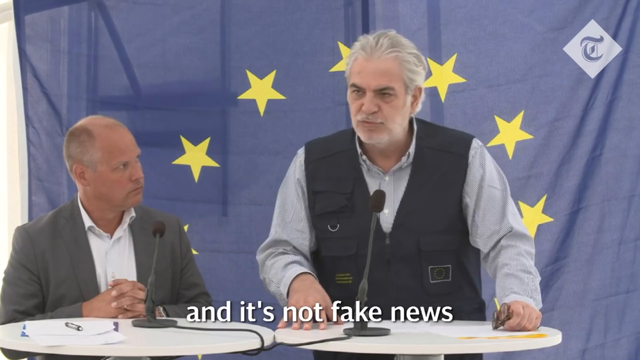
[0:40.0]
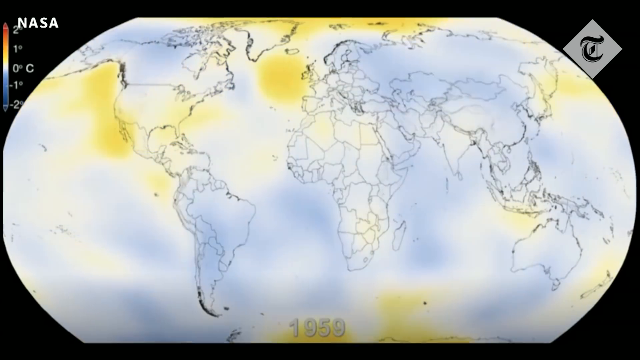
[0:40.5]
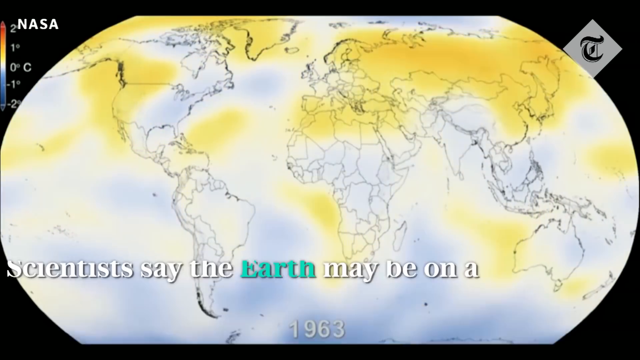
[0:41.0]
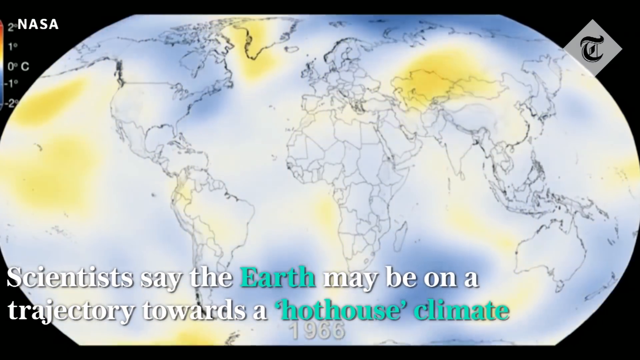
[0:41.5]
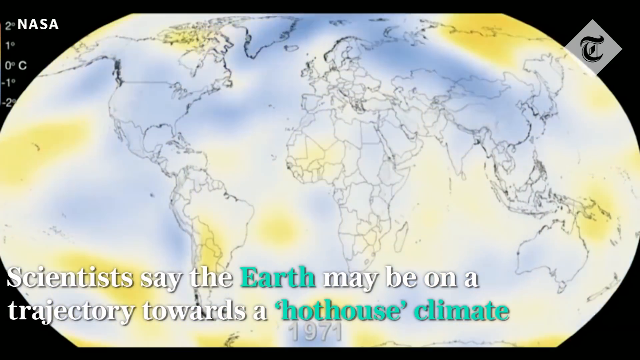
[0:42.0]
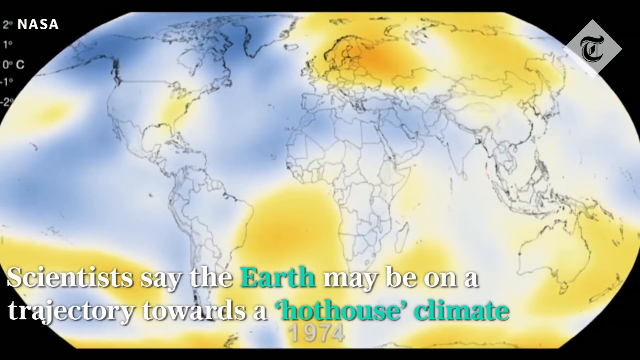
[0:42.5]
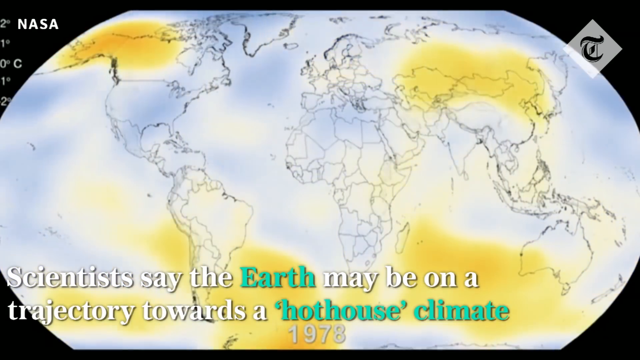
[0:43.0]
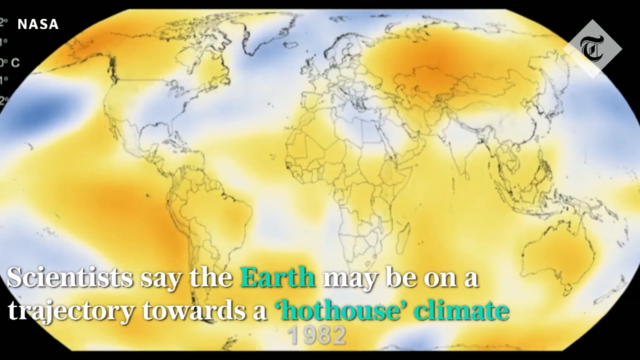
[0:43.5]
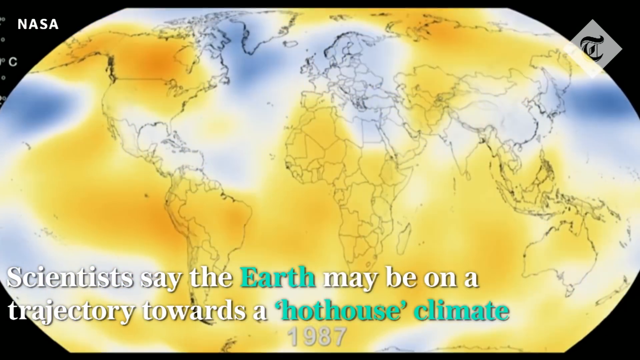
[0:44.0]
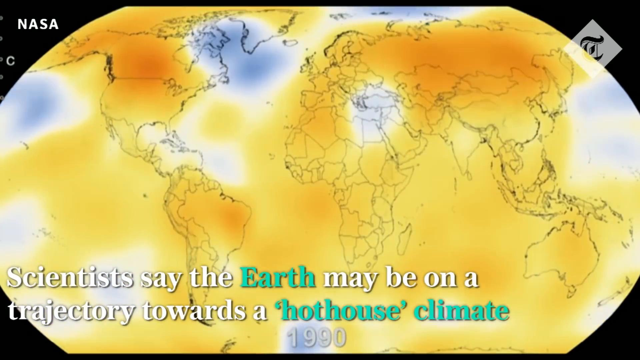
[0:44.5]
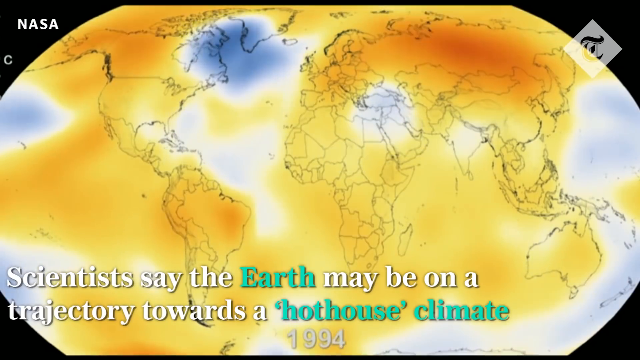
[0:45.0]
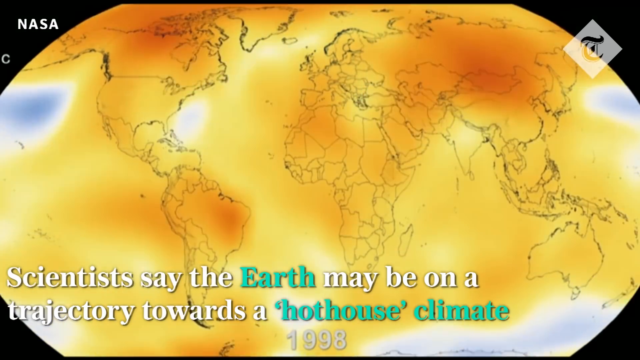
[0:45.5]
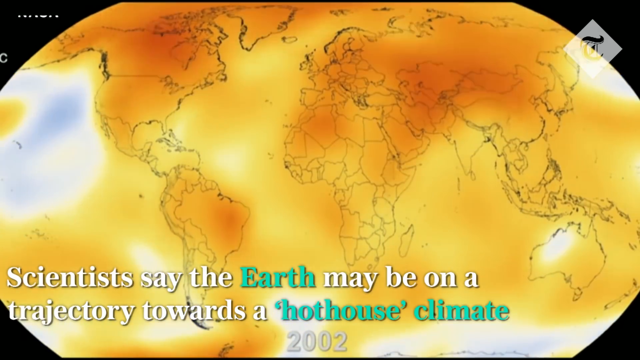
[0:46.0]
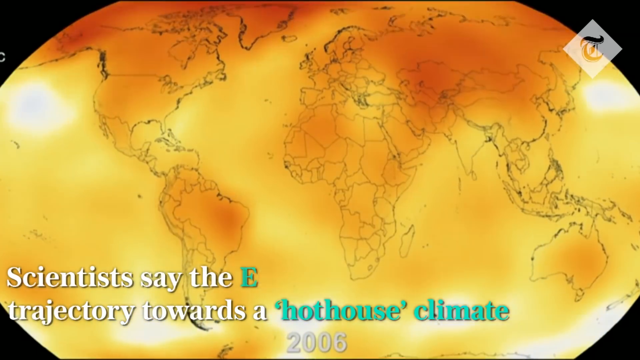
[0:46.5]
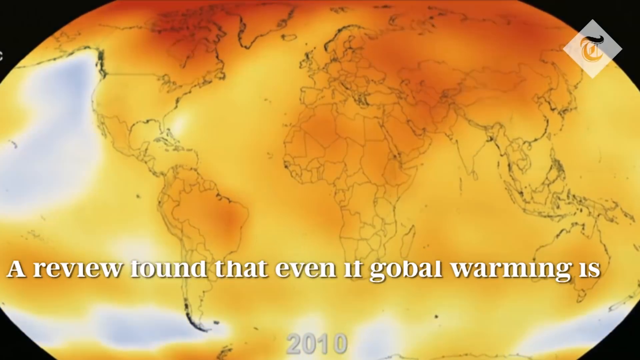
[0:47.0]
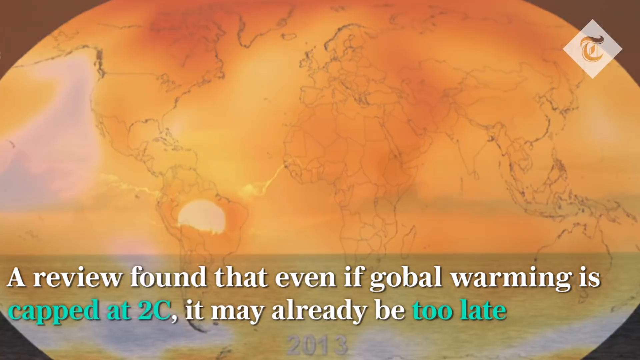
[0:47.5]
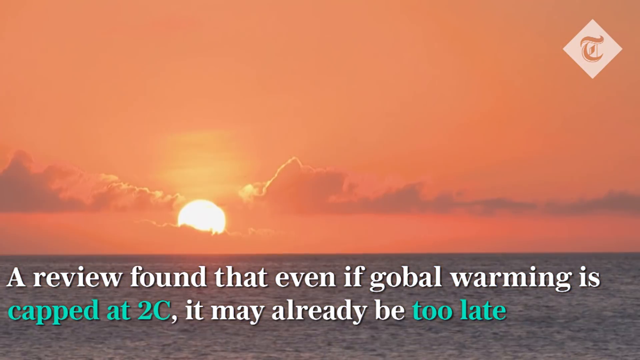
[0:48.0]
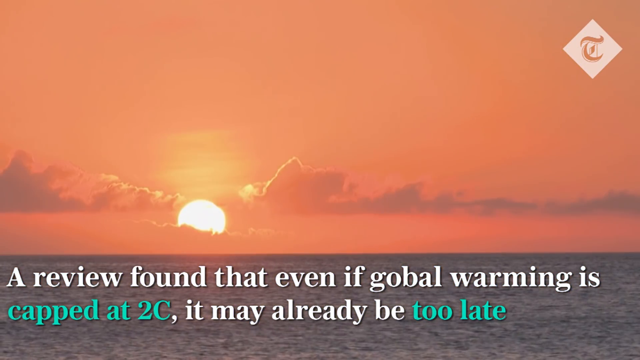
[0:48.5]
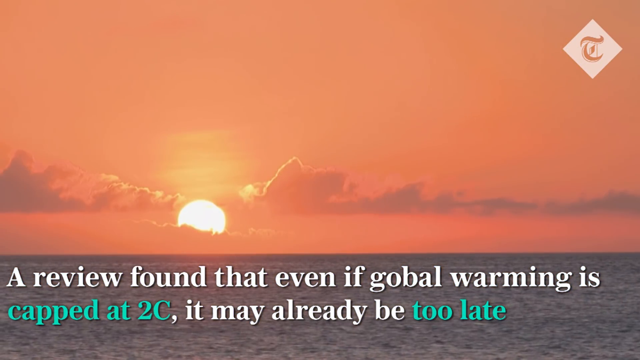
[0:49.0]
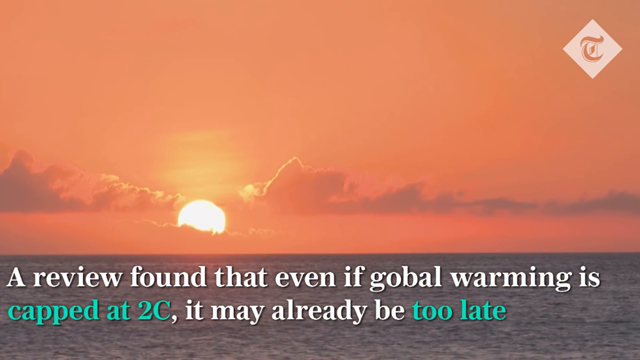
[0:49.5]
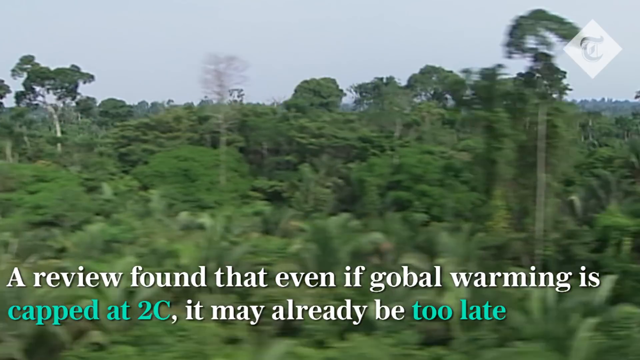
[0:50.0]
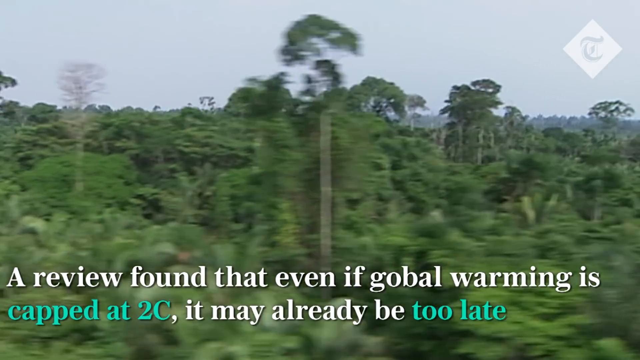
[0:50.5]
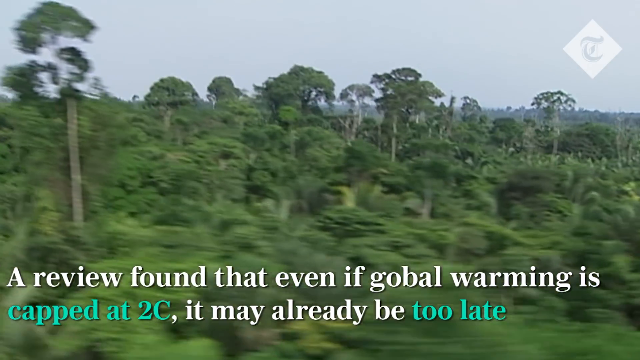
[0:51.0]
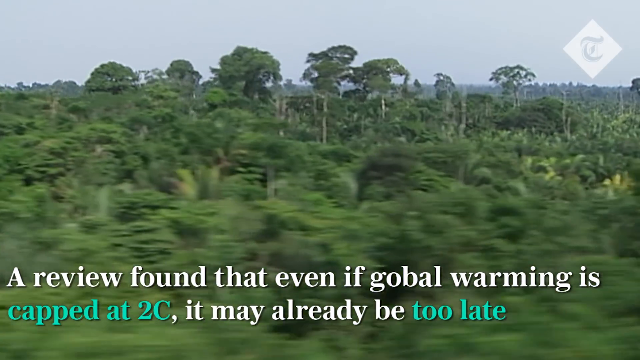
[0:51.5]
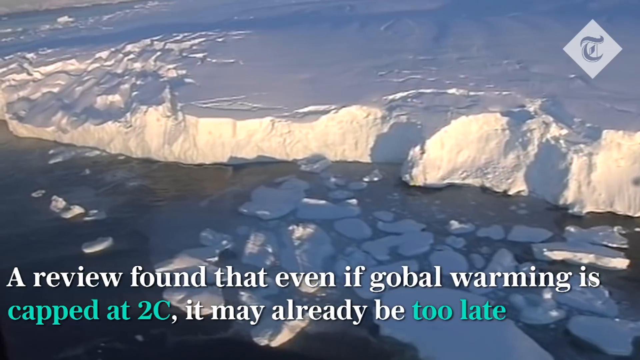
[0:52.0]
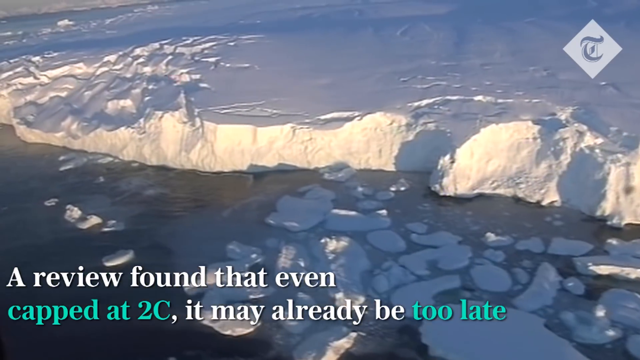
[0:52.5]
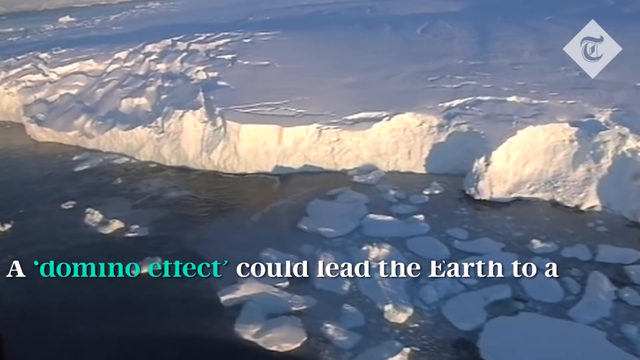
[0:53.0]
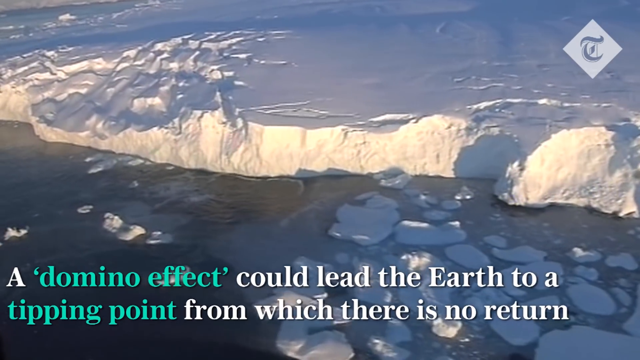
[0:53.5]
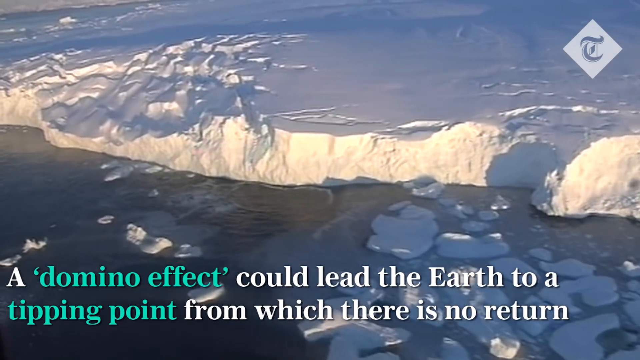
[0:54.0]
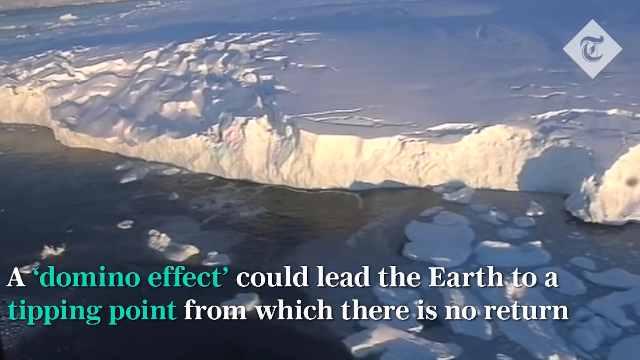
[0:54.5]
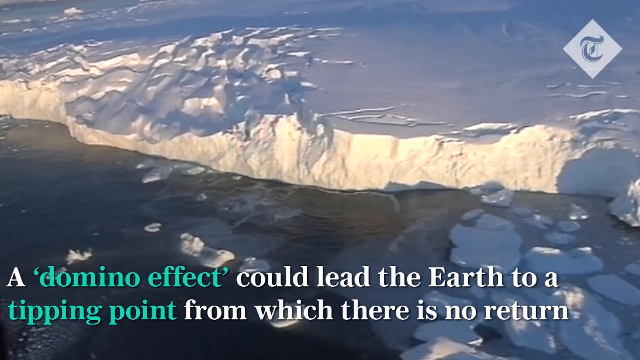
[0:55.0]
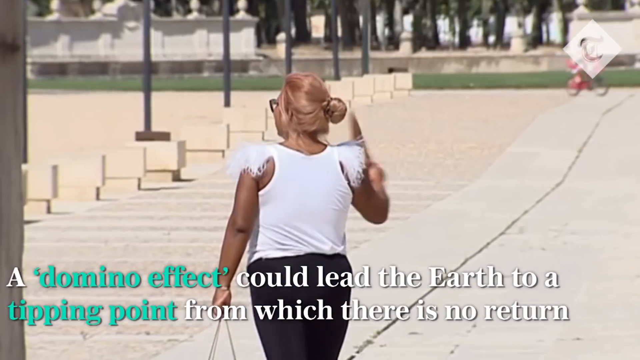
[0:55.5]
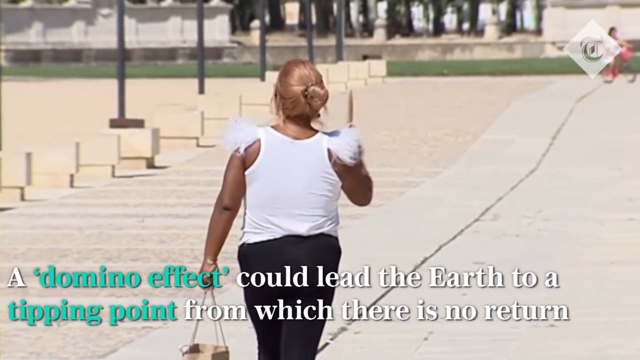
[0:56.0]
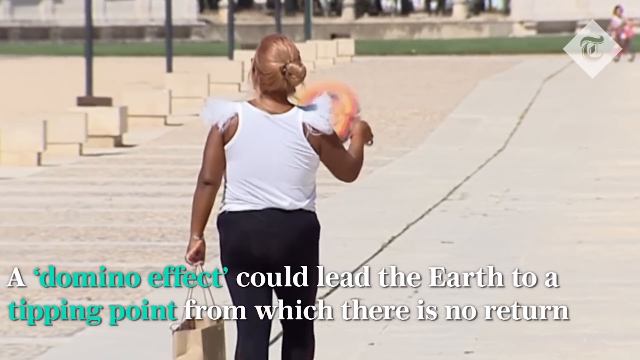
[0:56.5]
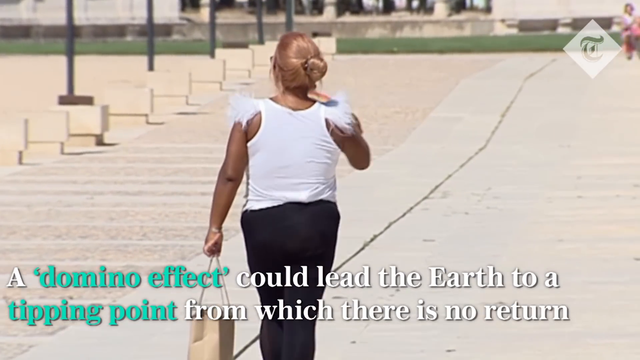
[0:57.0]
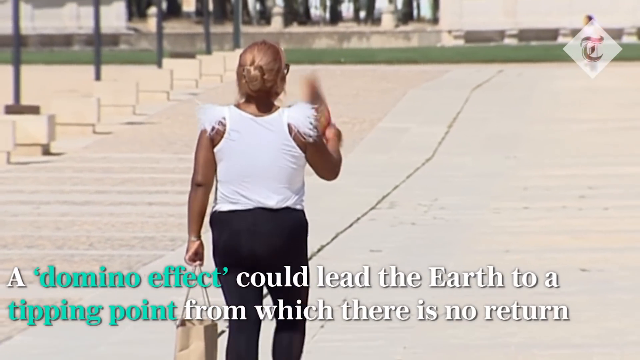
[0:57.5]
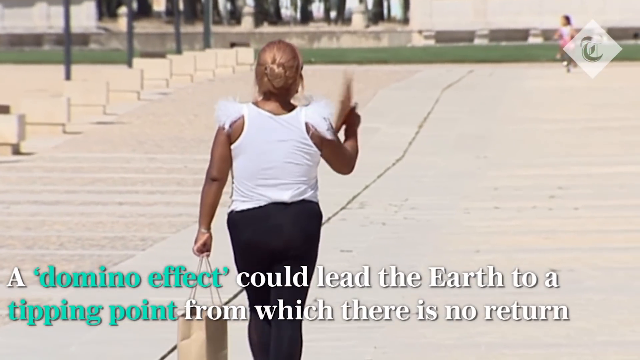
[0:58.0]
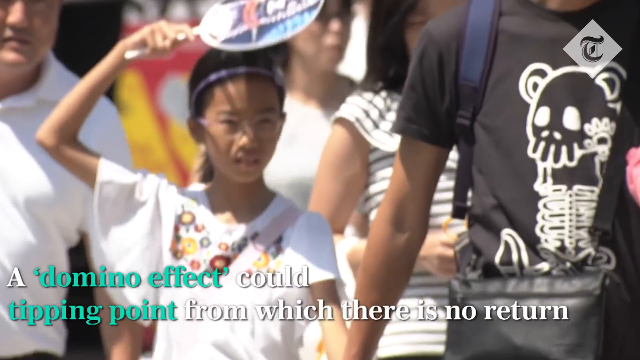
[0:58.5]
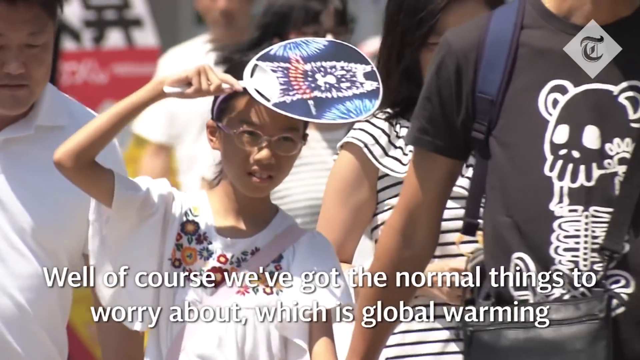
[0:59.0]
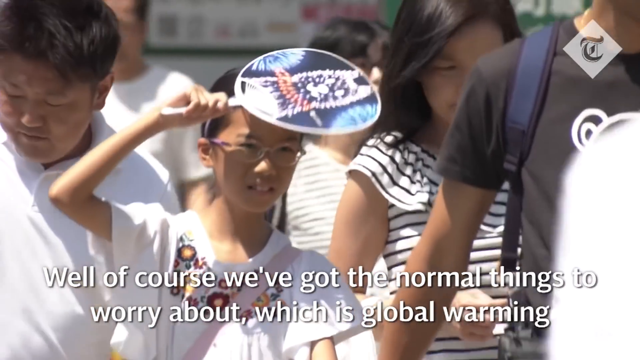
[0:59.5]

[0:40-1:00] Two white men have a microphone in front of them, on top of the tables. One wears a black long-sleeved pullover with a grey shirt; the other wears a coat and a white shirt. Both have short grey hair and grey eyes, and they look maybe 57 or 58 years old.